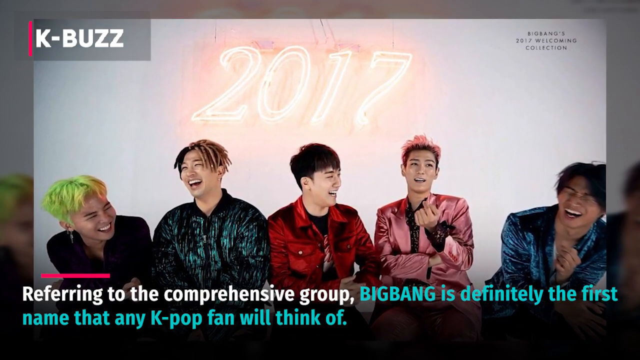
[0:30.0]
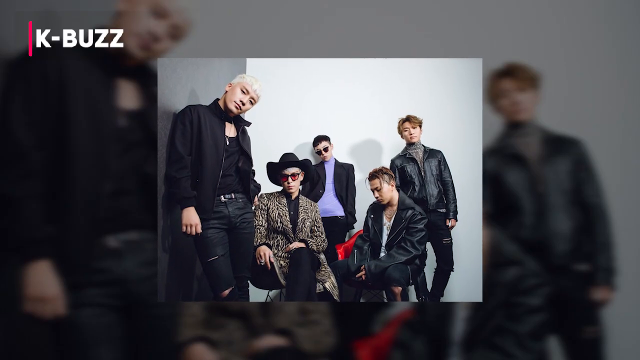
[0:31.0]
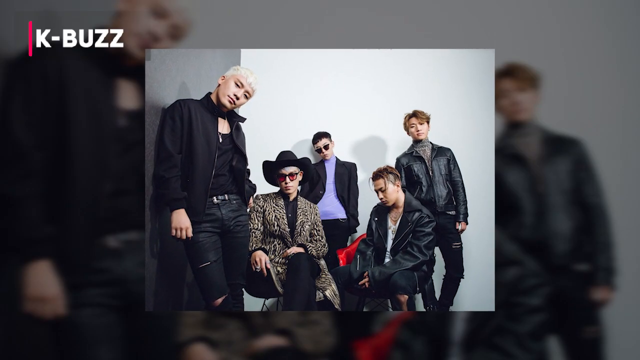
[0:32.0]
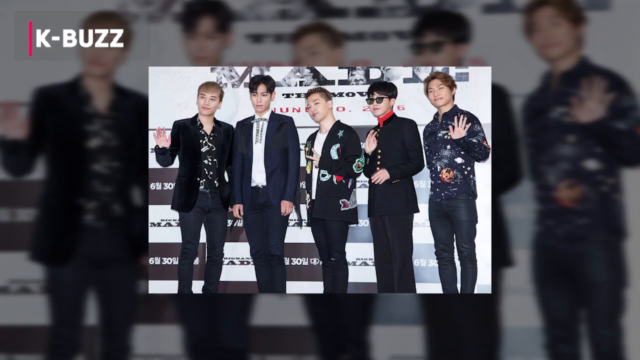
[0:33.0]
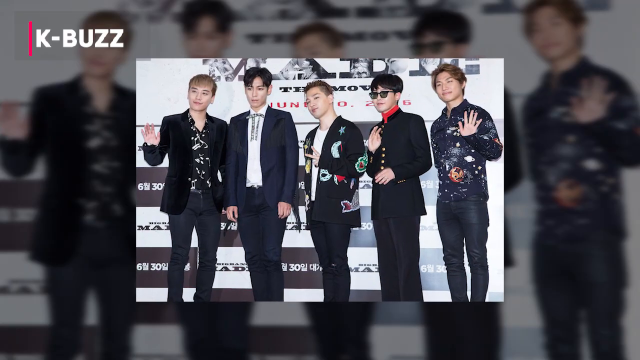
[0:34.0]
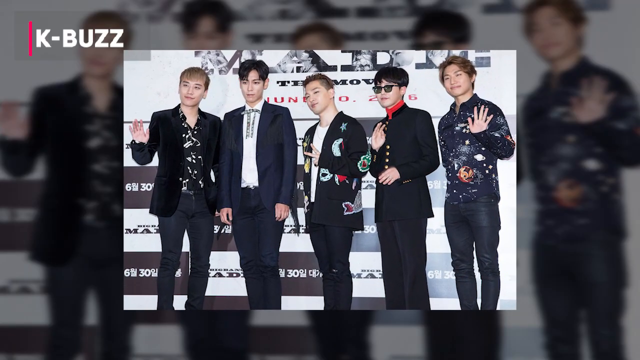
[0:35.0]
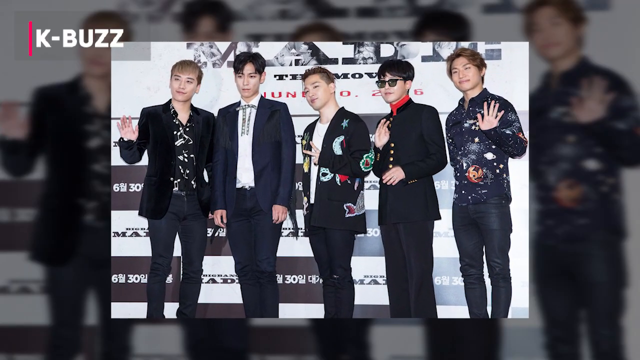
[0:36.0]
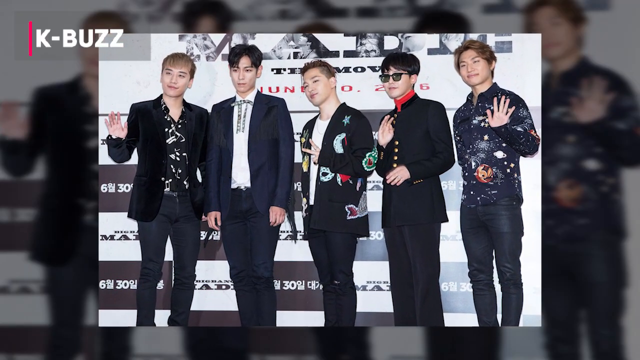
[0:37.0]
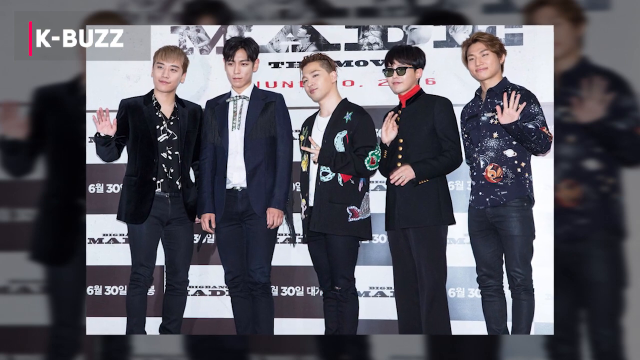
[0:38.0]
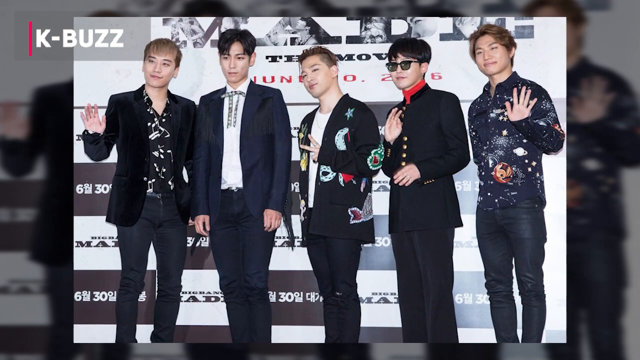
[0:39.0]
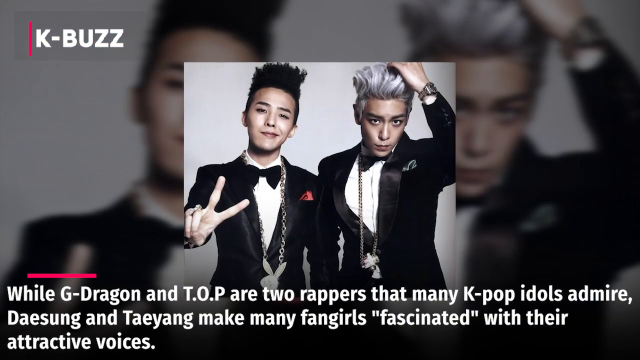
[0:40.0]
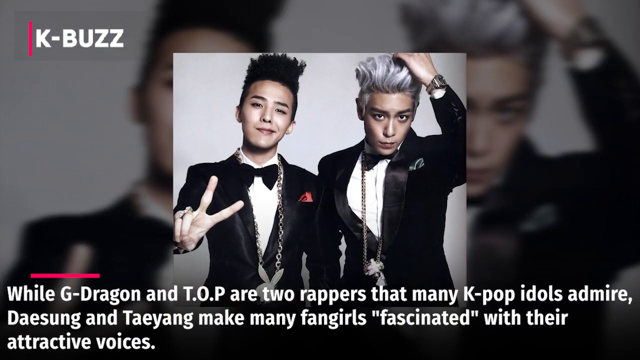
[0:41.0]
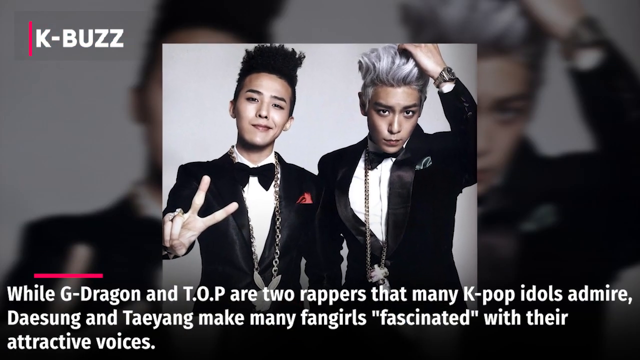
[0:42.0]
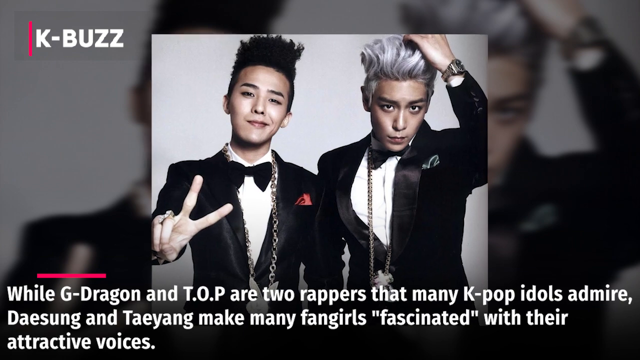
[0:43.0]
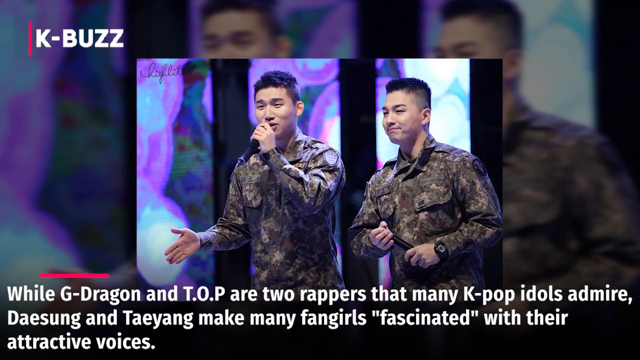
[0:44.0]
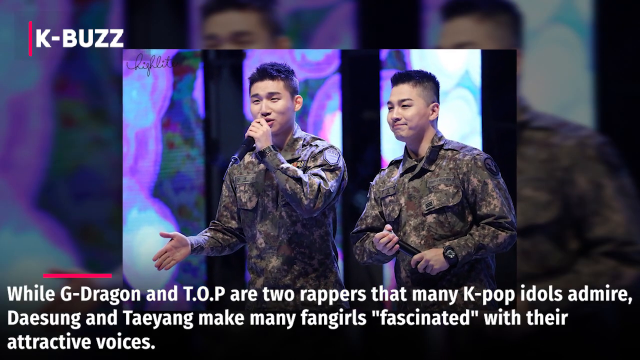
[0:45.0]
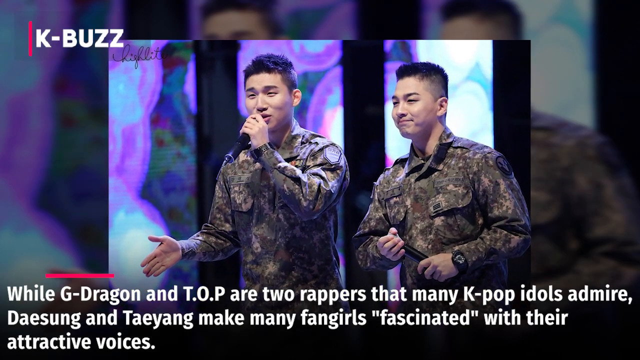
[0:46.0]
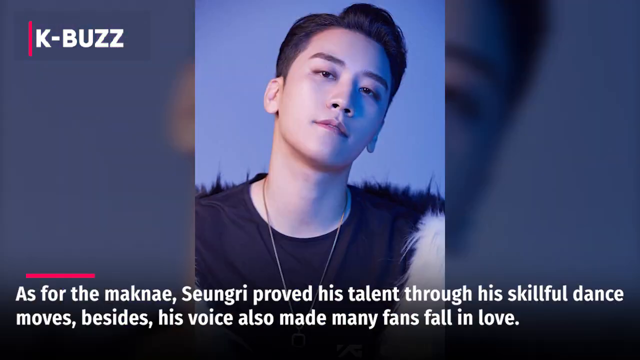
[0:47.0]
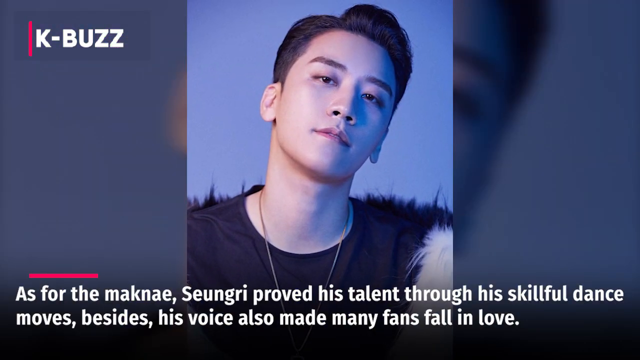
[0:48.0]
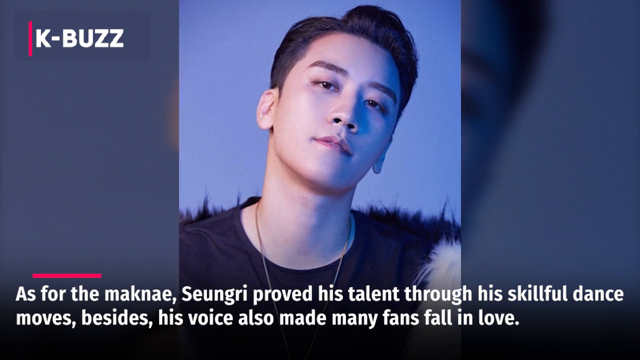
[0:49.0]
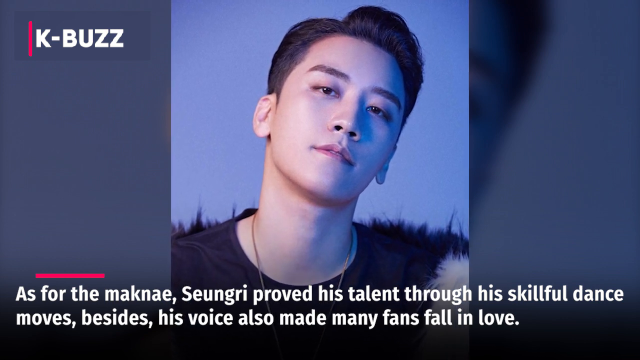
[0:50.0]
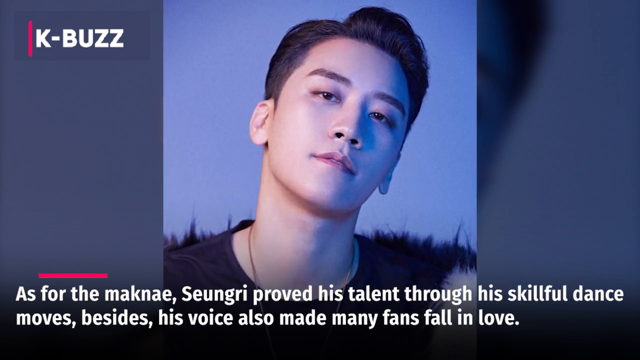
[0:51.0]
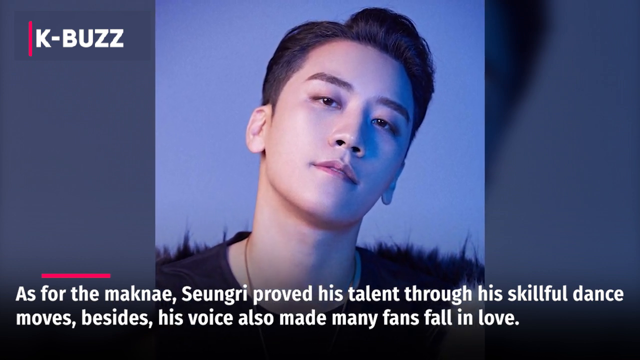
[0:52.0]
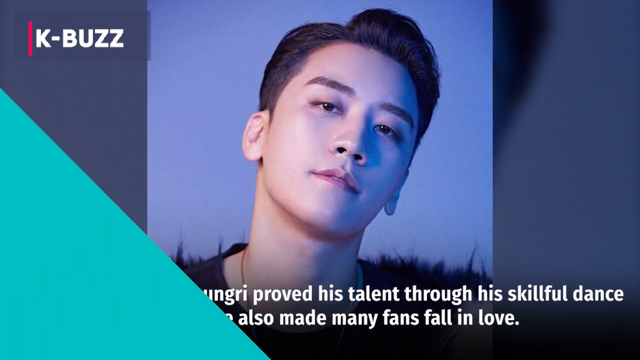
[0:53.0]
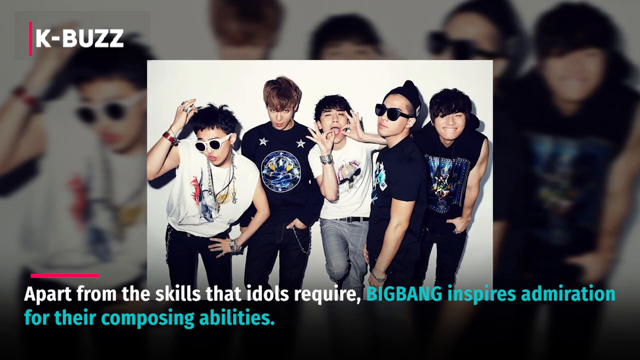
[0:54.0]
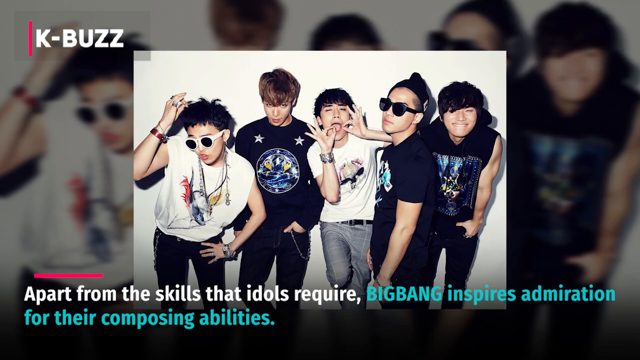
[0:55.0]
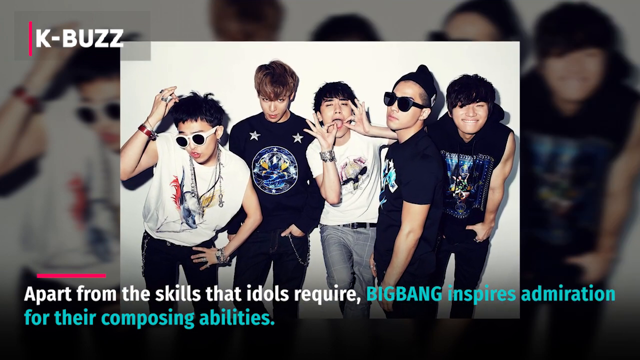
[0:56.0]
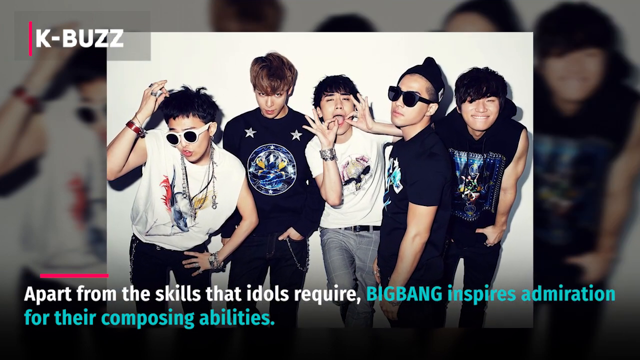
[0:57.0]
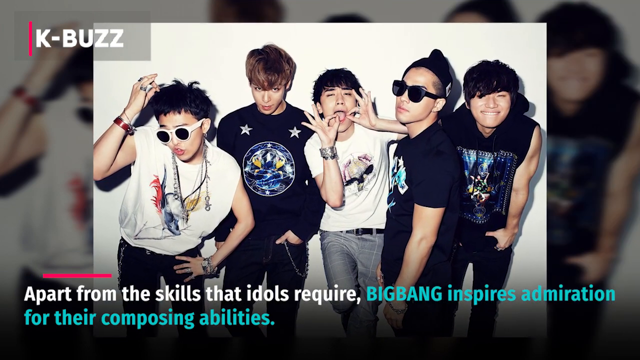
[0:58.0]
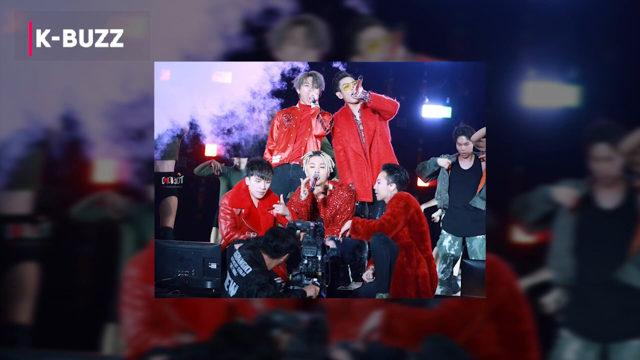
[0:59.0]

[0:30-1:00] The section dedicated to Big Bang continues with another photo of the band: three of the men are standing, one on the left, one on the right and one in the center, and the two in the middle are sitting down. Next is a photo from what looks like a press event, where the five are standing looking at the cameras; the ones on the far left and far right are waving, the second on the right seems to be making hand gestures, and the second from the left is standing still with hands down. Another green transition flies across the frame from bottom left to top right, revealing a picture of two Big Bang members in tuxedos with a white caption underneath: "while G-Dragon and top are two rappers that many k-pop idols admire Daesung and Taeyang make many fangirls fascinated with their attractive voices". The tuxedo picture goes away and two pictures of them in military uniforms on stage appear, either during or after their military service. A photo of one young man follows, with text underneath: "As for the maknae, Sungri proved his talent through his skillful dance moves. Besides, his voice also made many fans fall in love." After another green transition from bottom left to top right comes a more candid photo of the five bandmates standing or leaning against a white wall. At the bottom, white text reads "apart from the skills that idols require," followed in green by "Big Bang inspires admiration for their composing abilities." The section ends with a photo of the five bandmates on stage during a live performance, dressed in red jackets and black pants.